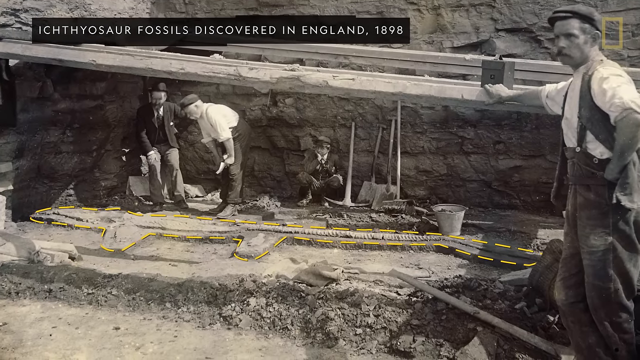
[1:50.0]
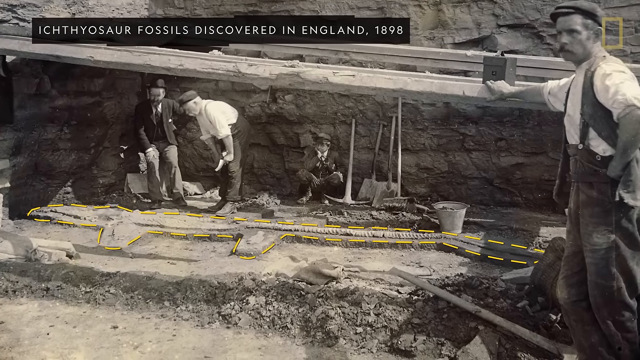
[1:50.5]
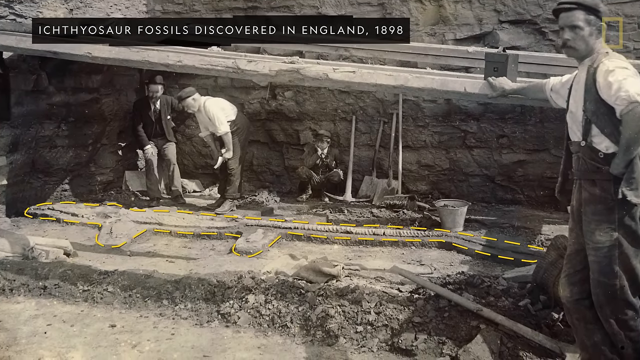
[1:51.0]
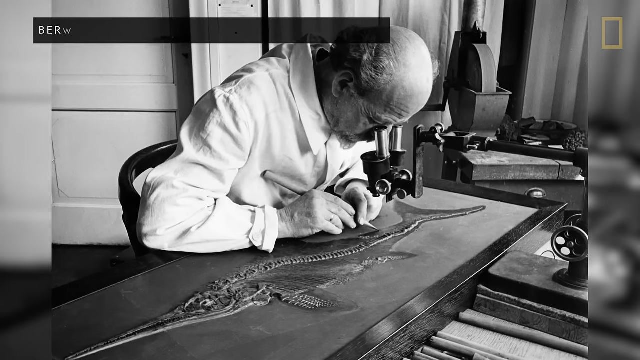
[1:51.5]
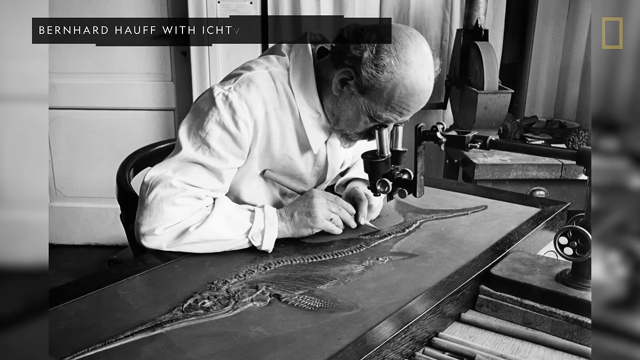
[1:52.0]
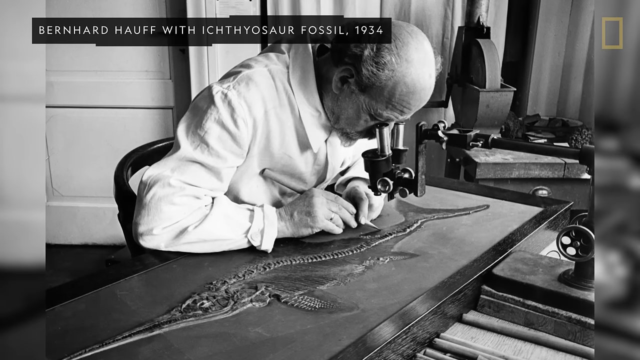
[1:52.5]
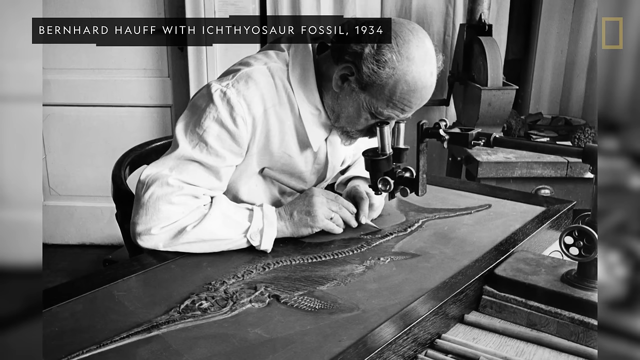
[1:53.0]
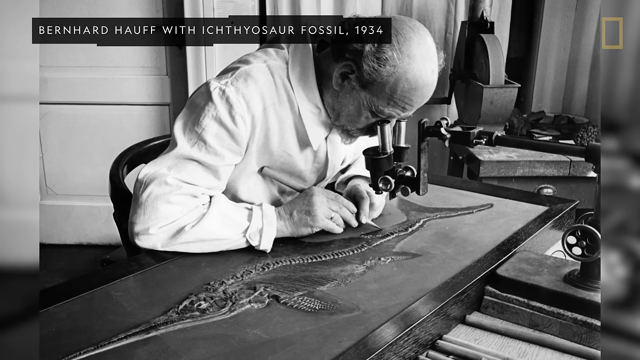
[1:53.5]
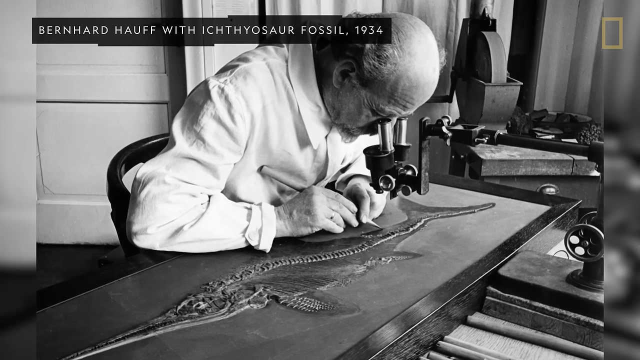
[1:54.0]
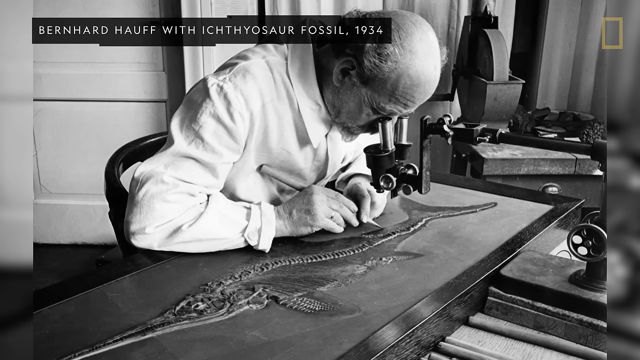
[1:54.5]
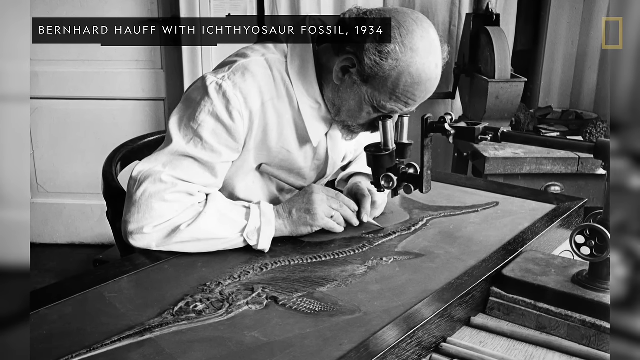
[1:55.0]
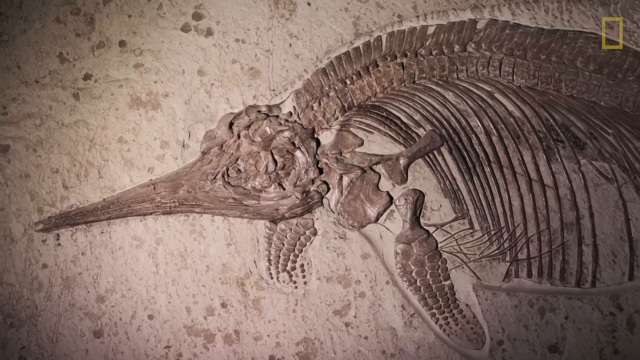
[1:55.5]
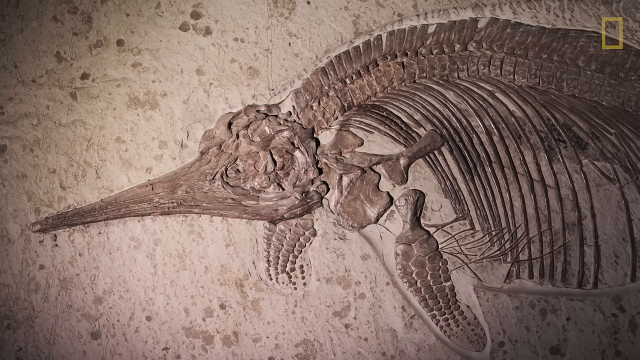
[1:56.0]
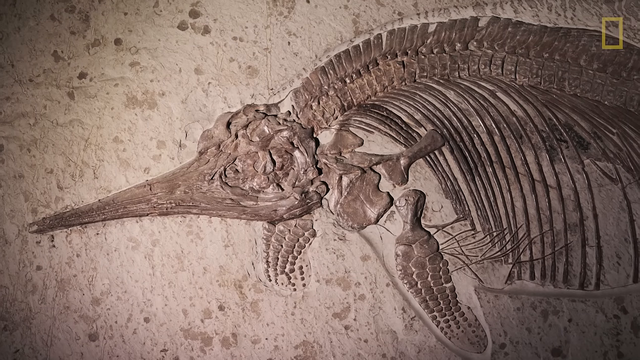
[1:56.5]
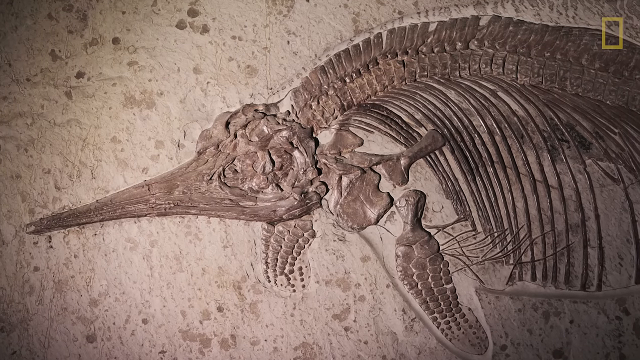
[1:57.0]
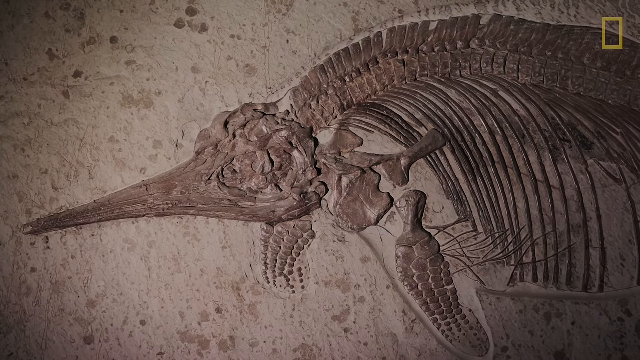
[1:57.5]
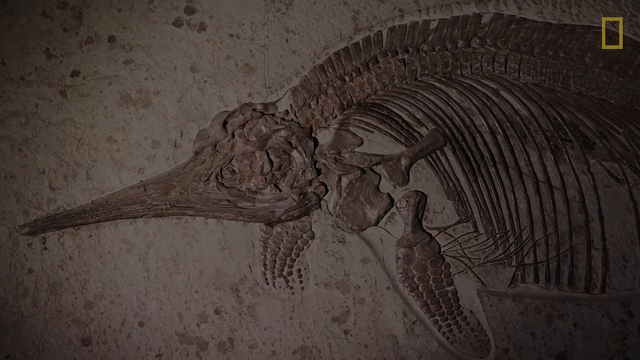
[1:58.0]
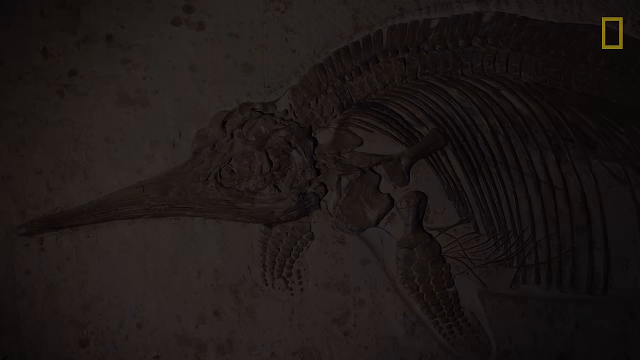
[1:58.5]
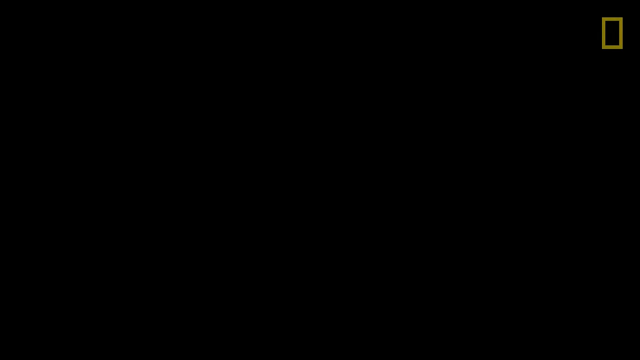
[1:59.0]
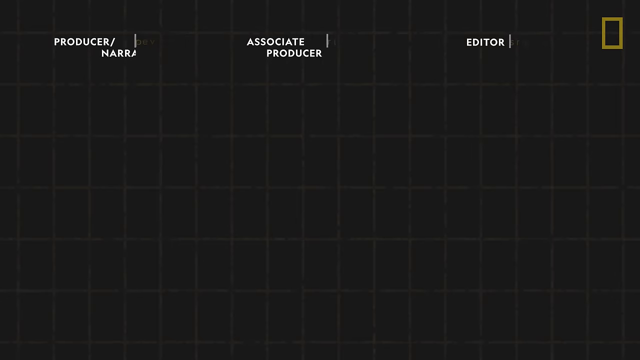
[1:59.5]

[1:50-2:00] The black-and-white photograph labeled "Ichthyosaur fossils discovered in England 1898" shows multiple men in a pit surrounding an uncovered fossil. The video changes to a photograph of a man slowly scraping away at a flat fossil with a large pick; he is sitting at a desk with a microscope in front of him. The photo is labeled "Bernhard Hoff with Ichthyosaur fossil 1934", and the video slowly zooms in on this black-and-white photograph. It then cuts to a photo of a different fossil that is more modern in comparison, and the screen slowly fades to black.